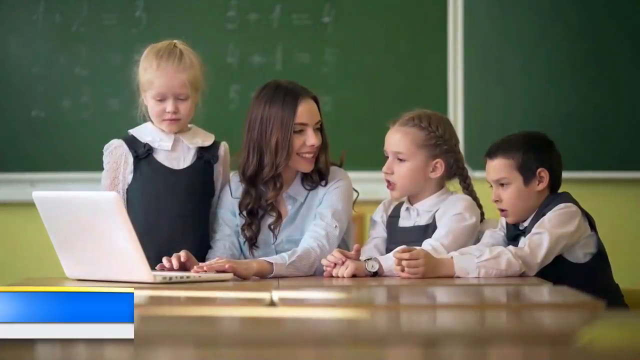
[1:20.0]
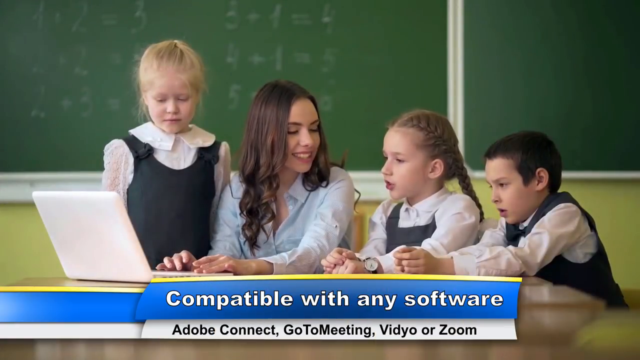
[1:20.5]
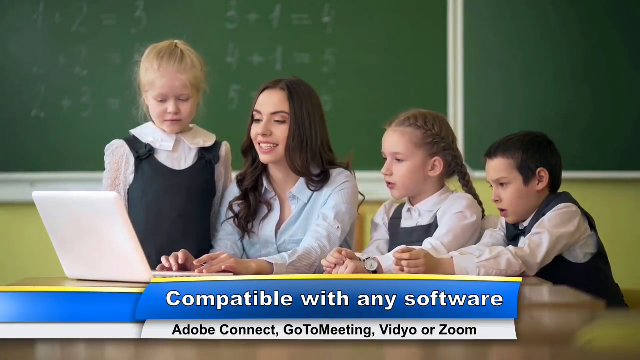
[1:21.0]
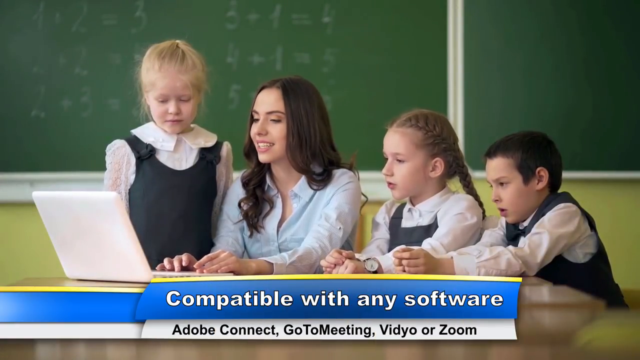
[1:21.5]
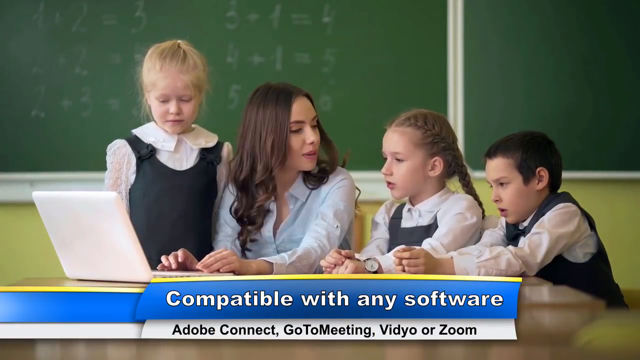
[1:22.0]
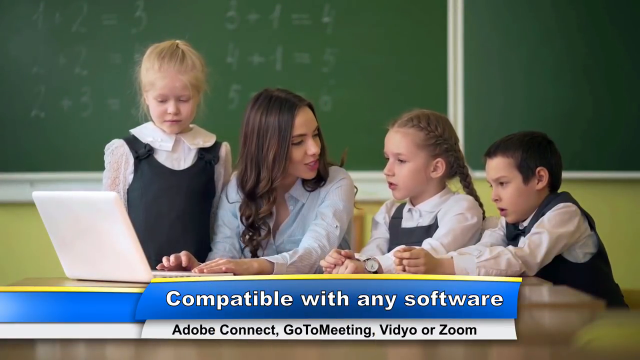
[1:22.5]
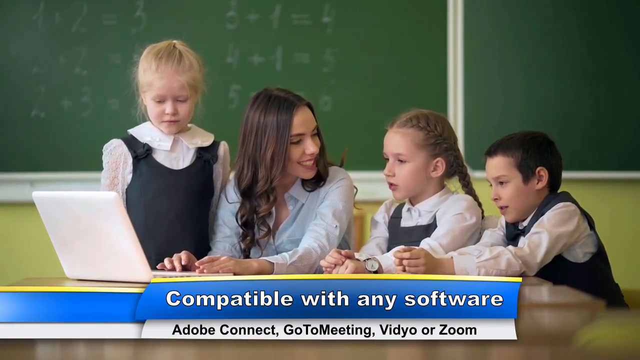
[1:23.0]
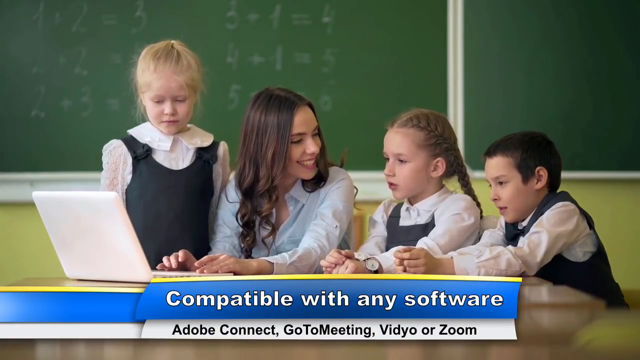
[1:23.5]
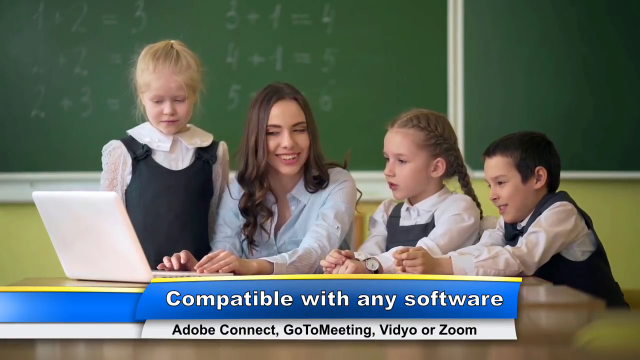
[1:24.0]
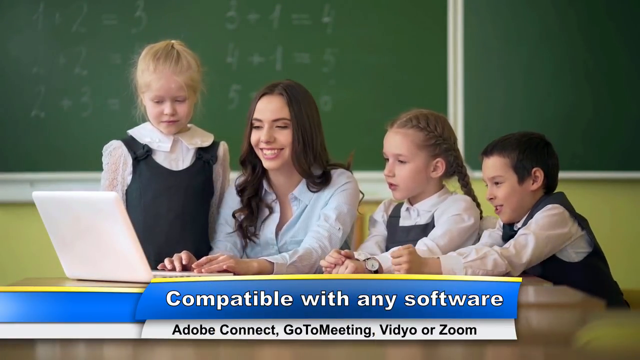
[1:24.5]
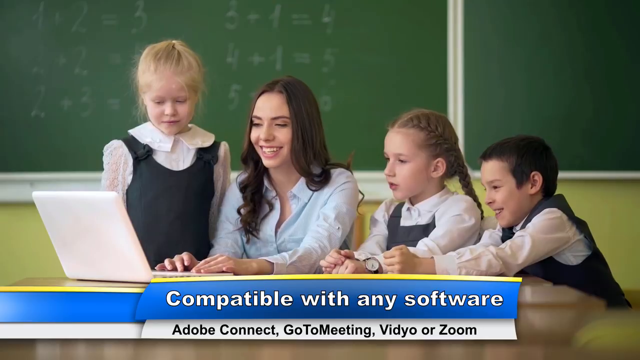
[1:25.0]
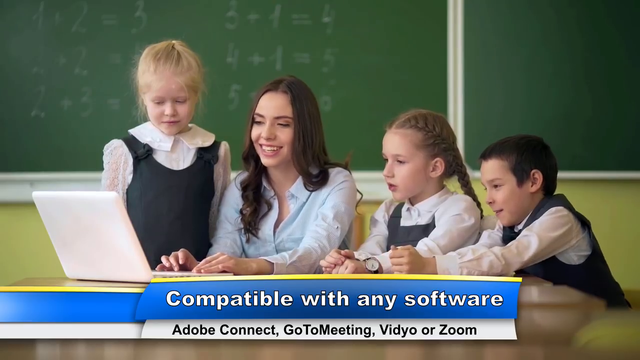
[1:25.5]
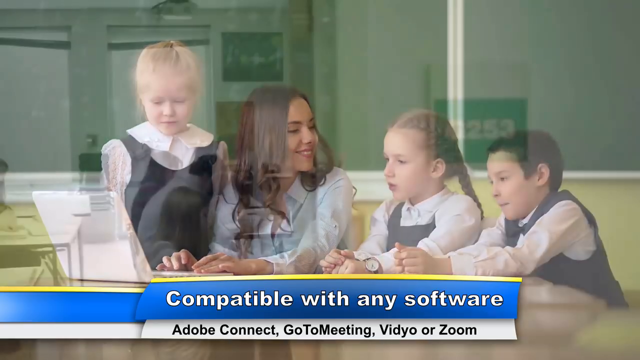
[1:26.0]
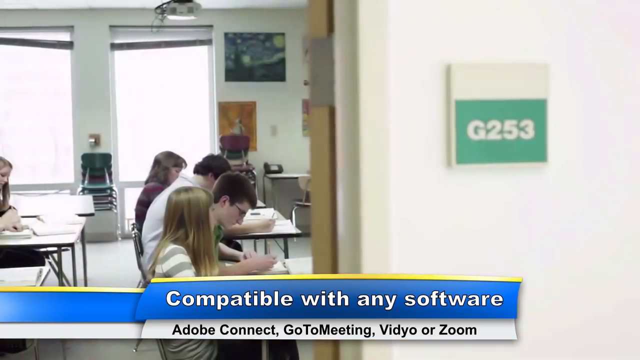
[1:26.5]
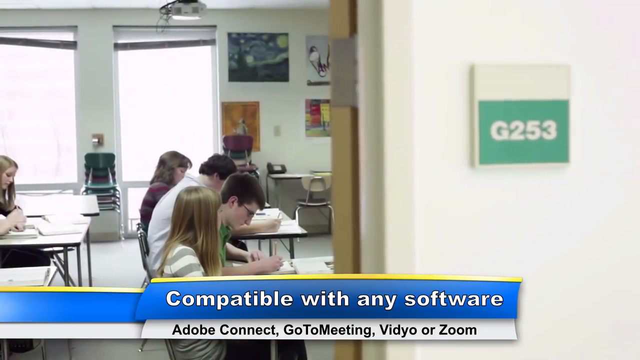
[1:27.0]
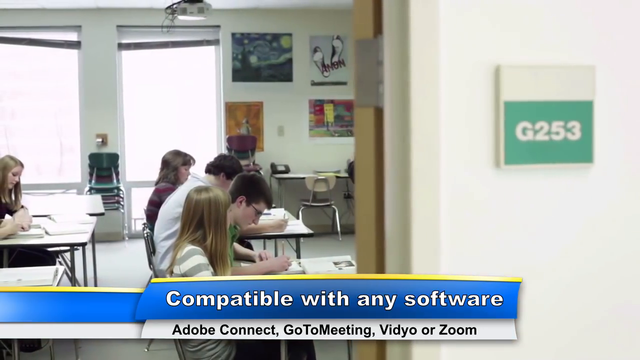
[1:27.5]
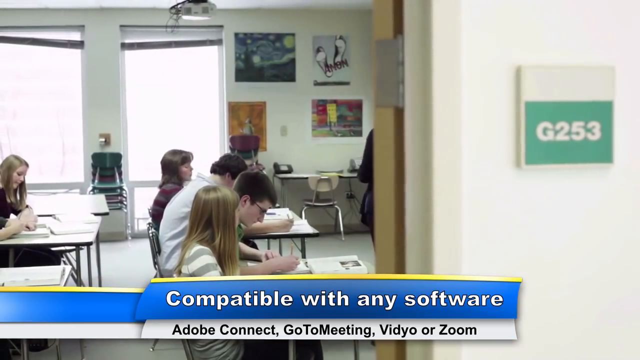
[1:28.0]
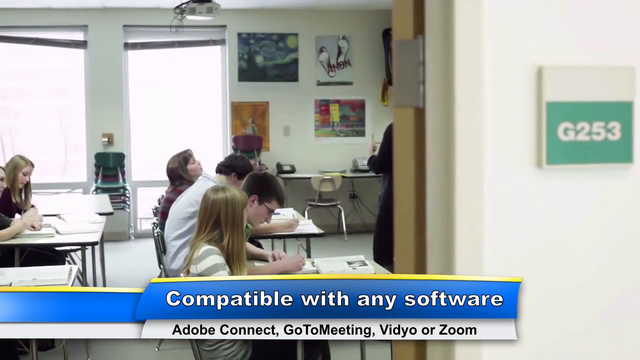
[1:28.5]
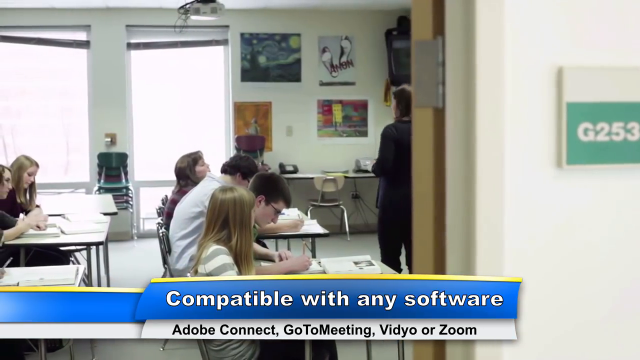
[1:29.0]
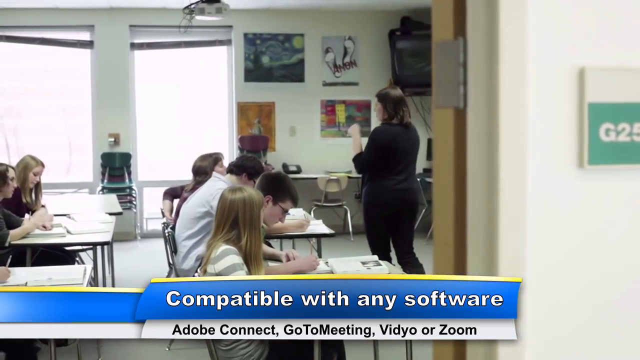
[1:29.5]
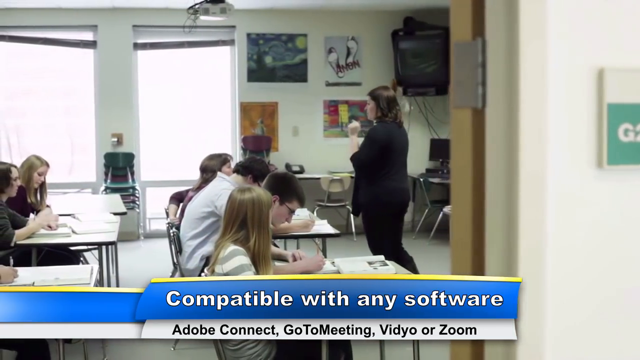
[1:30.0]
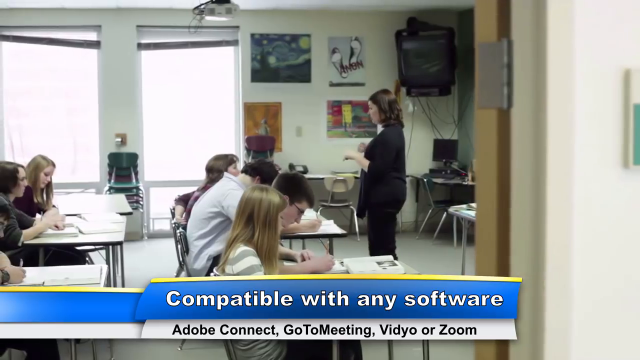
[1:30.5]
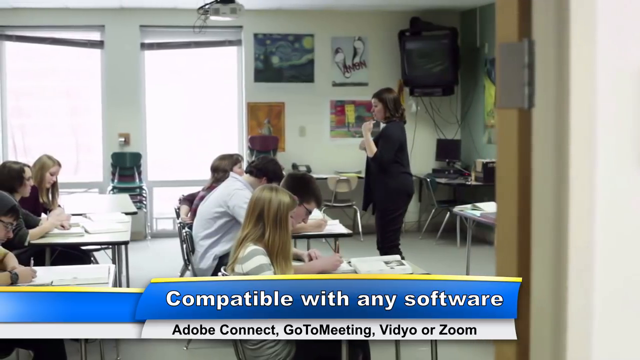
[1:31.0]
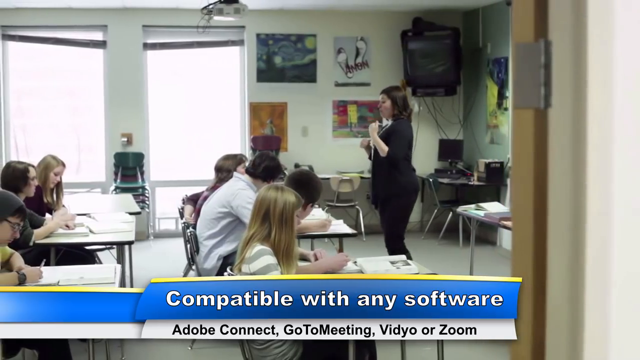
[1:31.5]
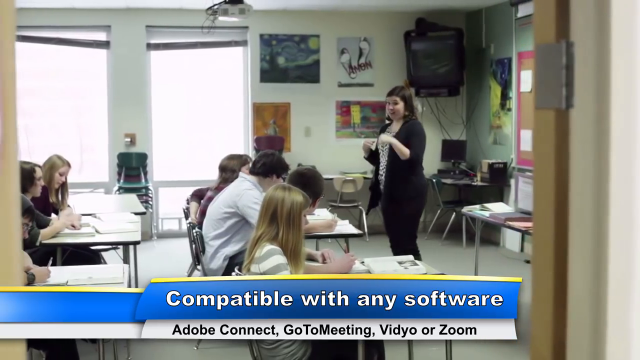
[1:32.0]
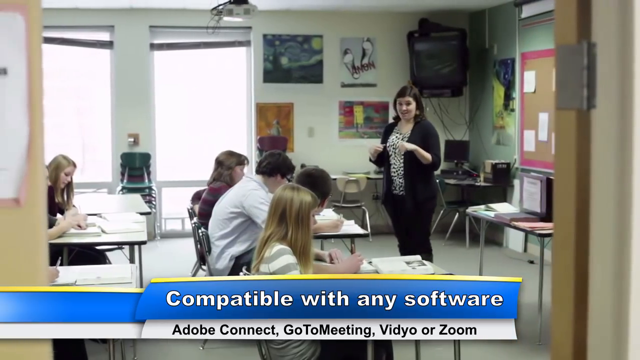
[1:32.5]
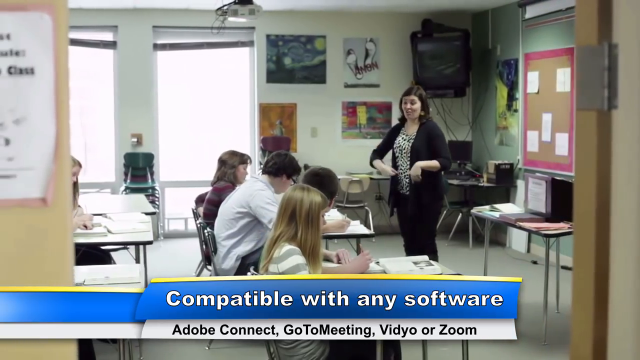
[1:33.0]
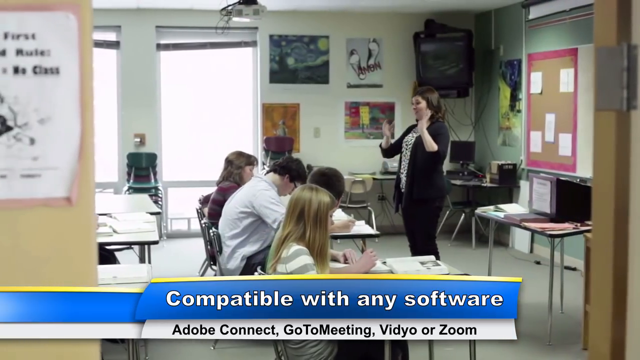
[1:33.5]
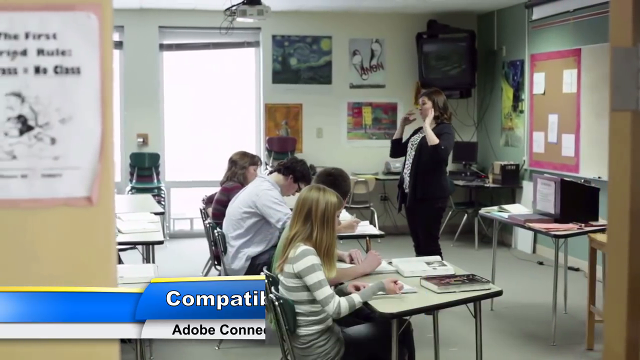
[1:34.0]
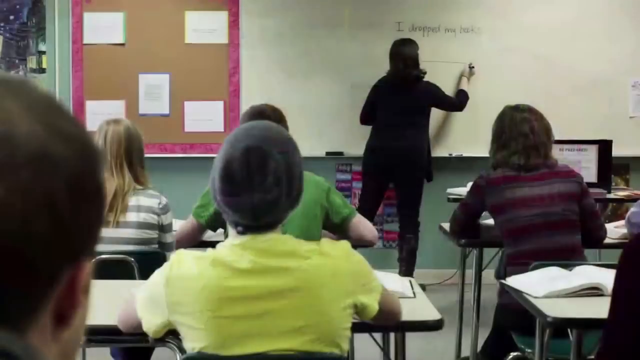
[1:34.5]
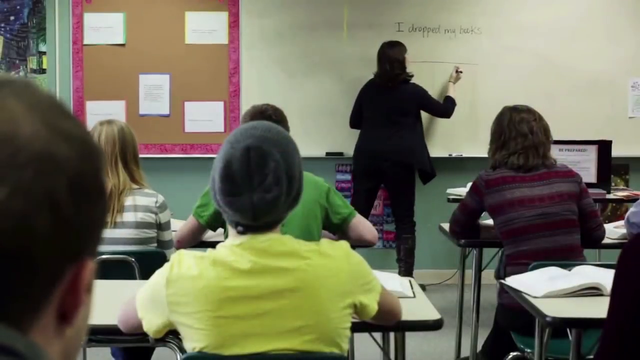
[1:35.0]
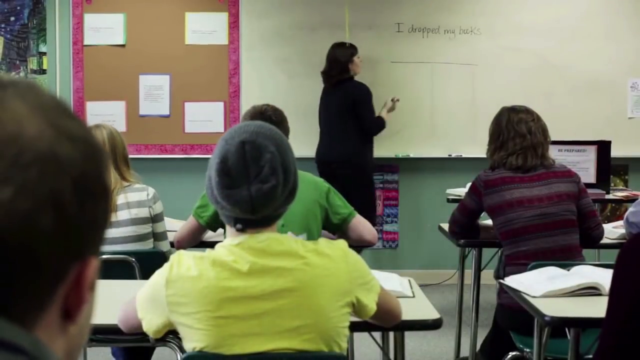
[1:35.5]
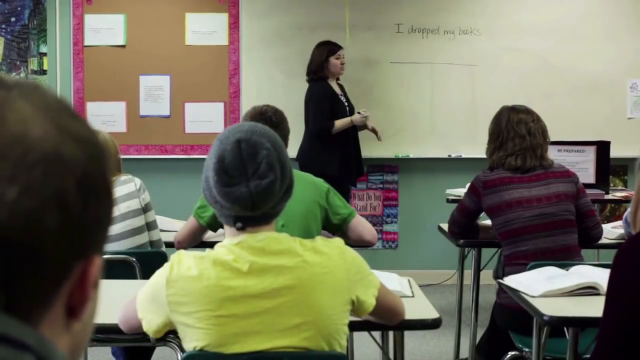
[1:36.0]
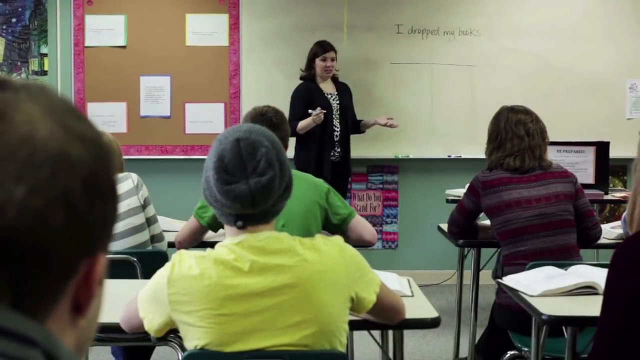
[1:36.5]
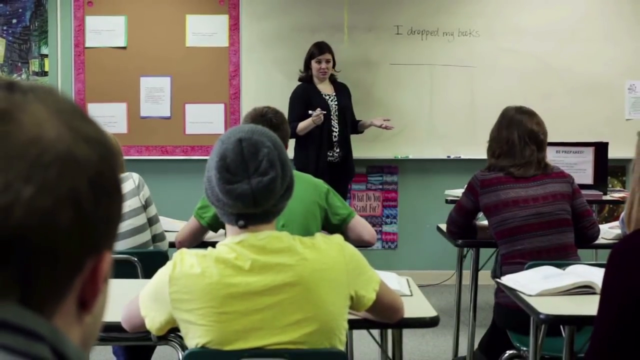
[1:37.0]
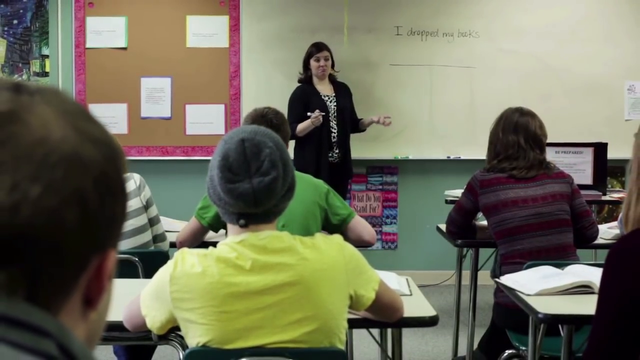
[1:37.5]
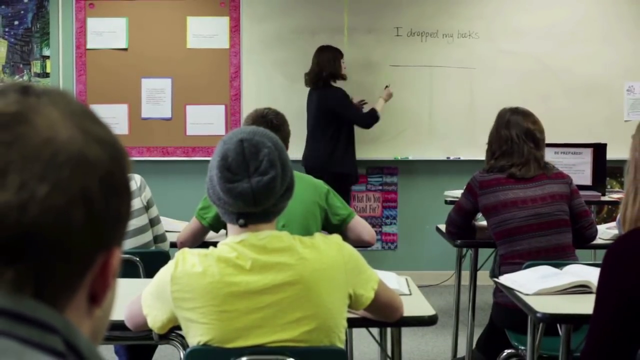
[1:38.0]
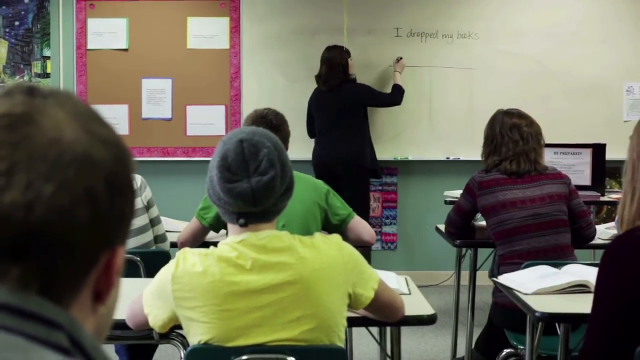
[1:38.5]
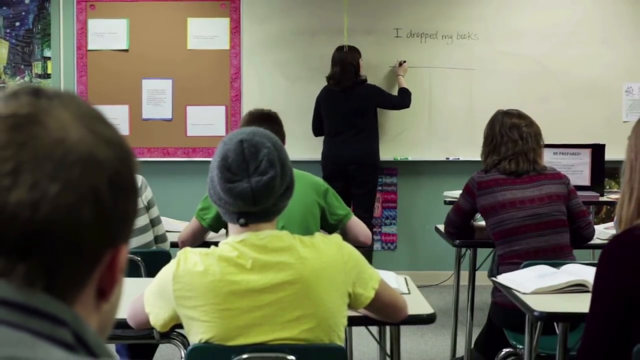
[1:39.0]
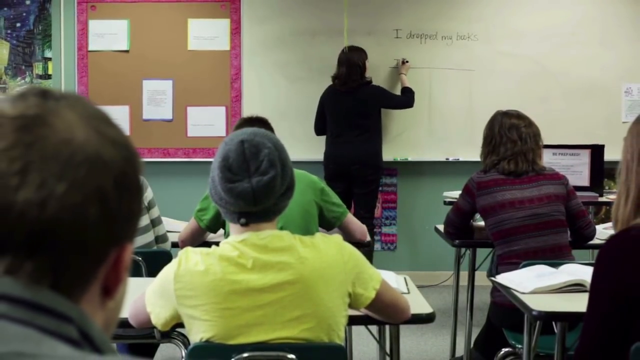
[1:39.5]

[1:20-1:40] The woman teacher sits typing, occasionally looking at the students to her left. Black text below reads "compatible with any software, Adobe Connect, GoToMeeting, Video, or Zoom." The shot cuts to a classroom of children sitting at desks, seen from the door entrance so the children appear from the side. A teacher on the right side of the room, wearing black, teaches the class, talking and using hand gestures. She writes "I dropped my books" on the whiteboard with a line under it. The camera angle then shows the classroom from the back.